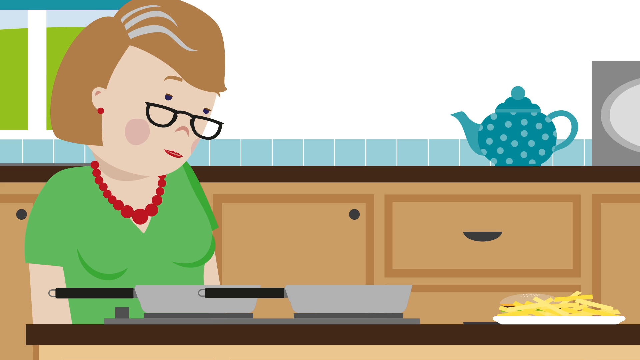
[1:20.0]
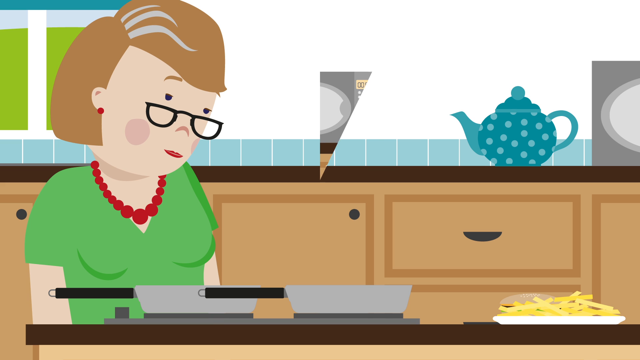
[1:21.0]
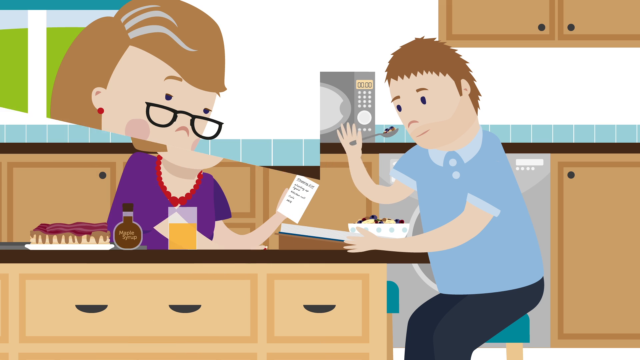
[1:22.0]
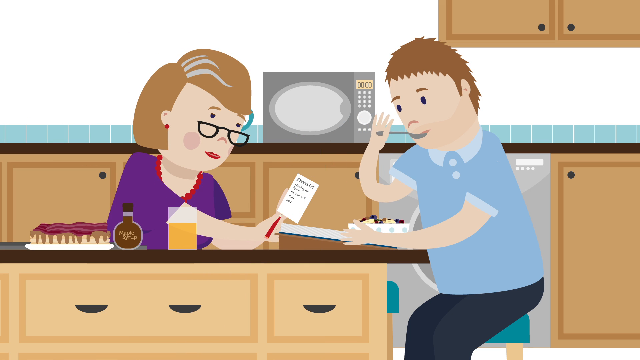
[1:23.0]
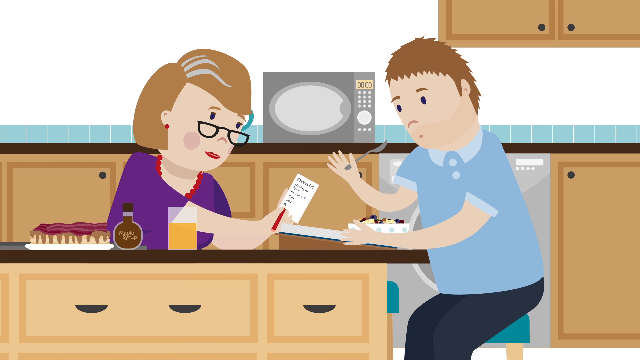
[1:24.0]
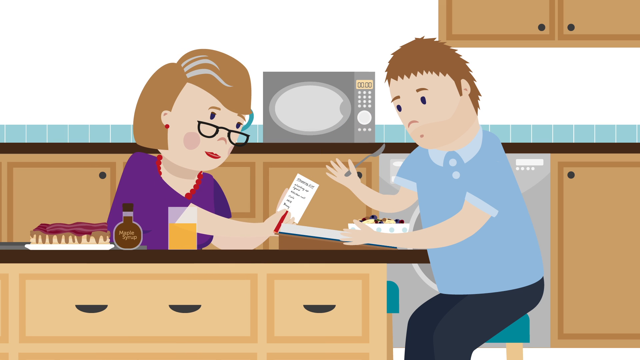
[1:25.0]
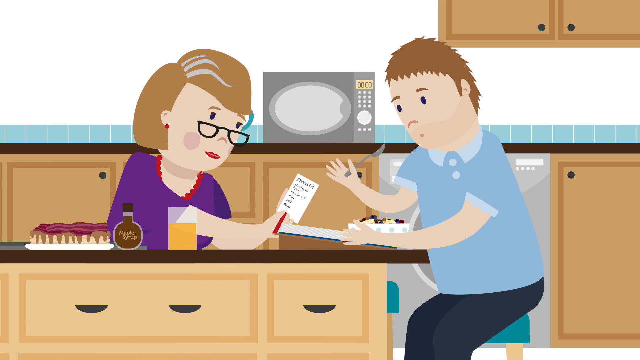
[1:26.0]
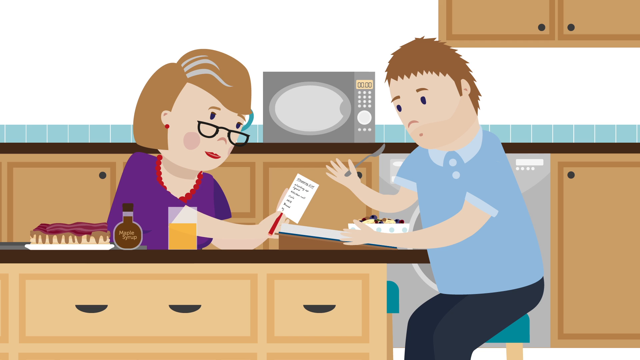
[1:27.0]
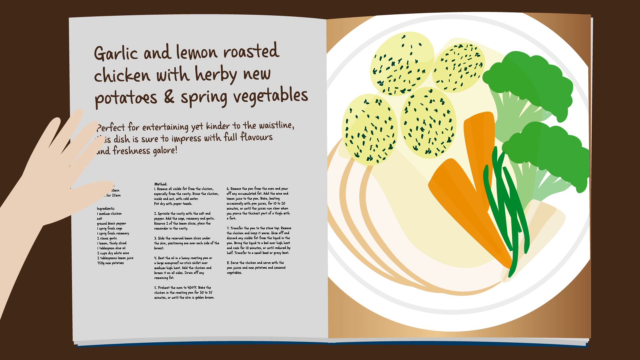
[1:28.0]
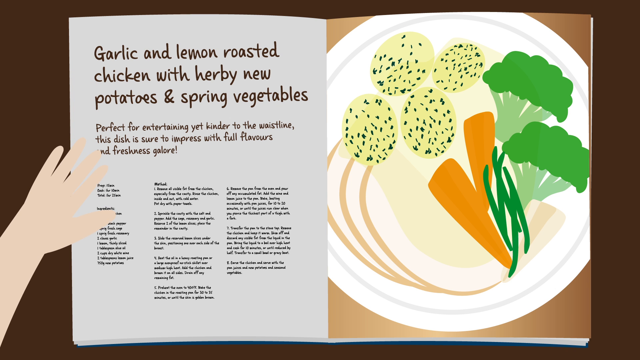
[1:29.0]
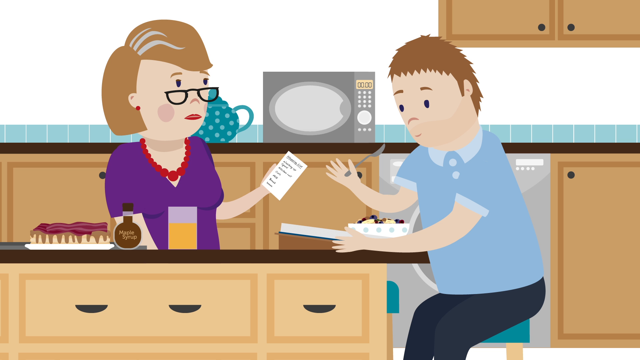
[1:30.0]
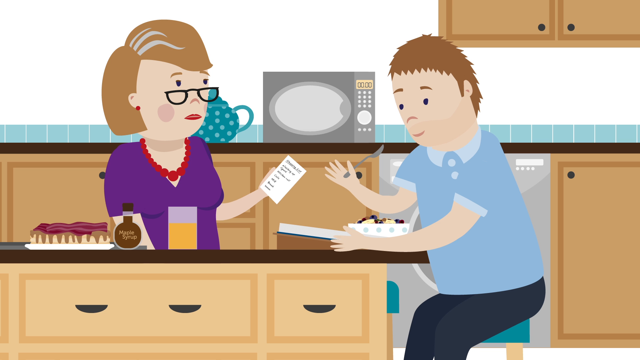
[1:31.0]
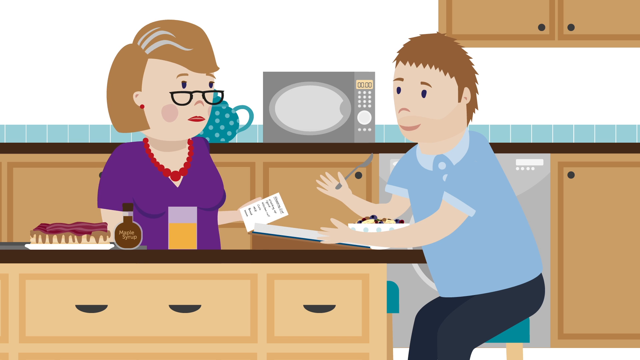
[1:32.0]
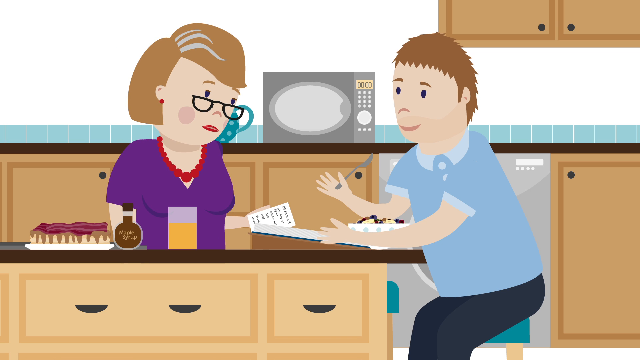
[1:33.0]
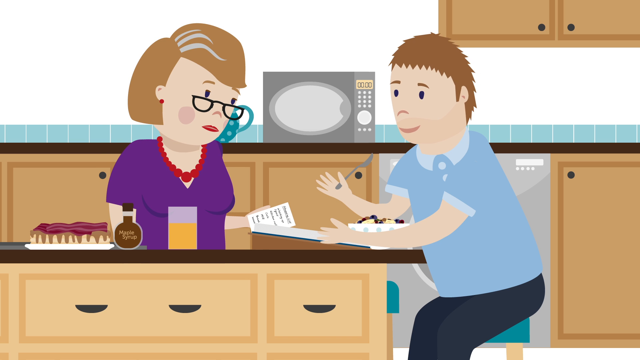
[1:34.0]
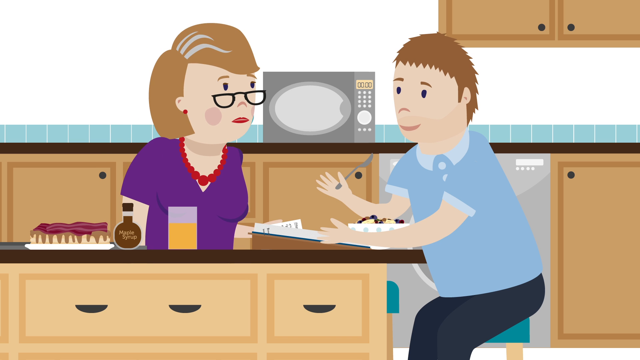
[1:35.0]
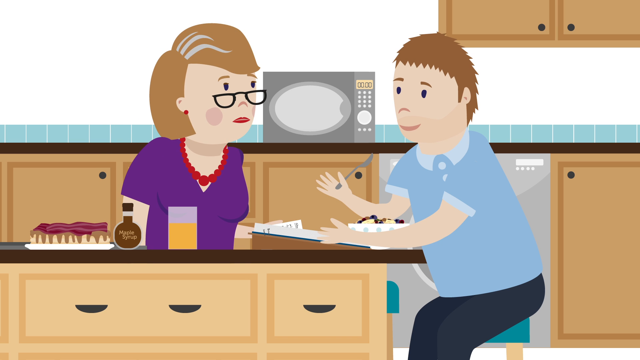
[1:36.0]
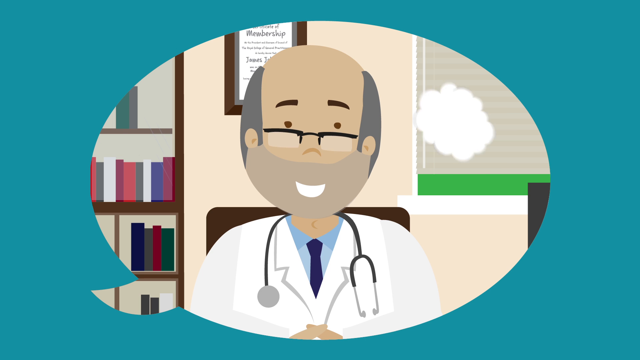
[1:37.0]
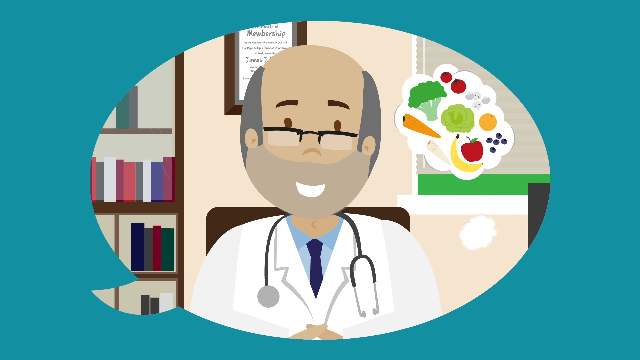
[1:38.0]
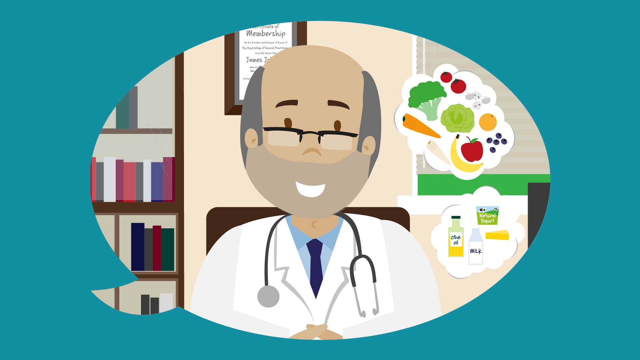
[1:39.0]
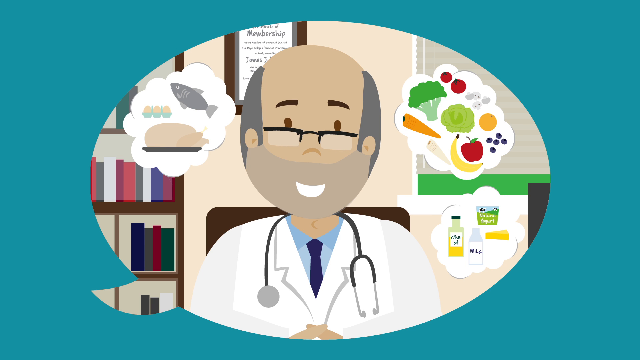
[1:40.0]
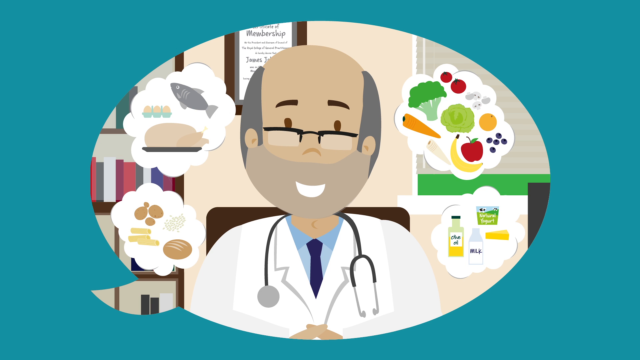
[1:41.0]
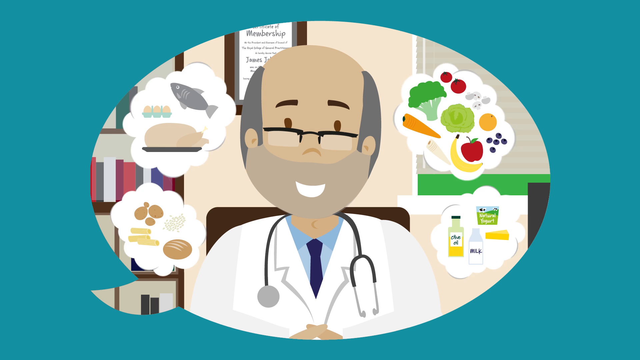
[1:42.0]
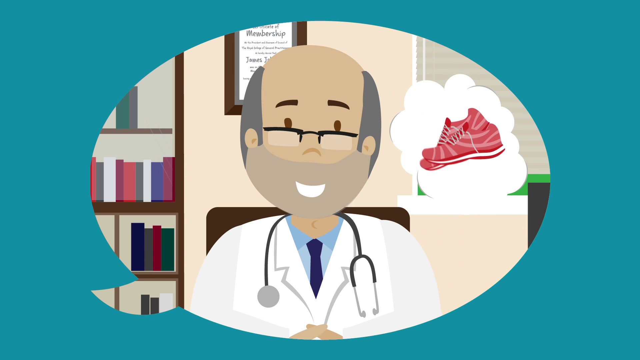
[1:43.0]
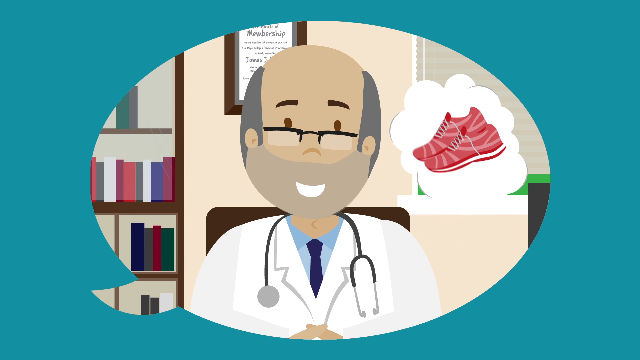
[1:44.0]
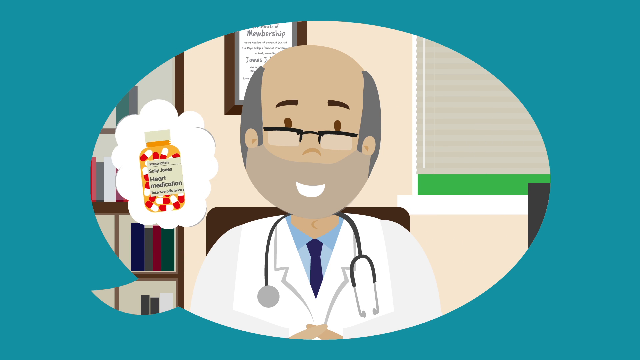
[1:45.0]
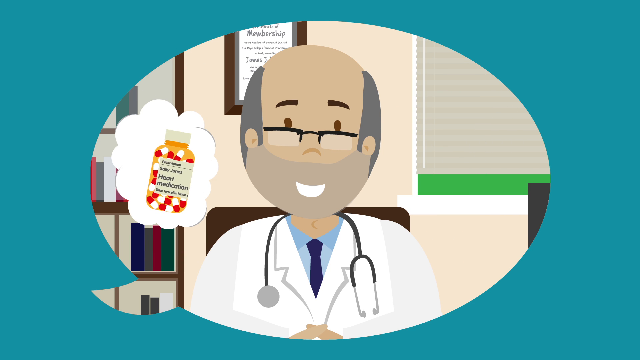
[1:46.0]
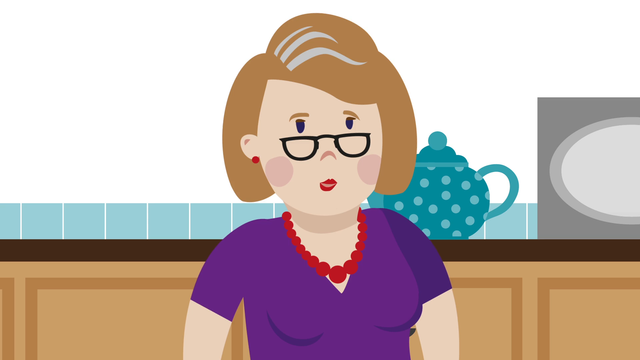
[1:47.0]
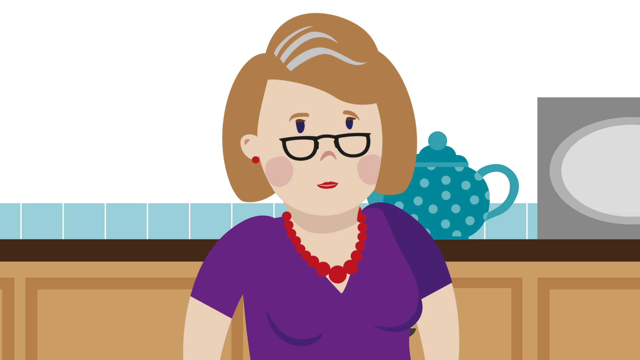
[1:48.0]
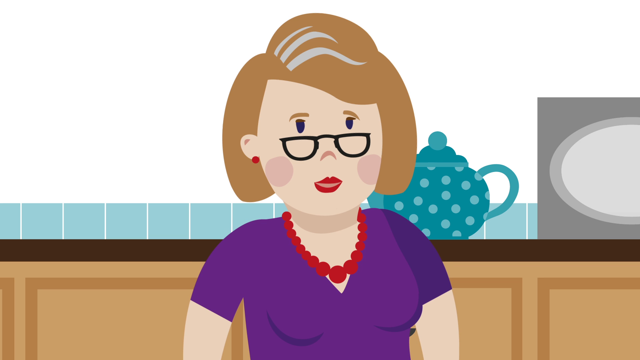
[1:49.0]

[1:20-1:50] The lady, who may be a cook, teacher or mom, has black-rimmed sunglasses, brown hair, a green sleeveless dress and a red necklace. In the background are the blue teapot with light blue dots, a little blue tile above the cabinet or counter, white walls and a small gray part of the microwave. On the right side of the screen is a plate with possibly french fries and a hamburger or sausage, two gray pans are on the stove part of the island, and there is a little green on the left side of the screen. Not much is happening. The cabinets are brown, with light tan cabinet doors with a lighter border. The lady writes something down, and a boy in blue, maybe another son, is reading something and eating. The lady, in her purple dress, holds out a paper with possibly ingredients or requirements toward the boy in the blue shirt, light blue pants and brown hair; she is not handing it to him, but he has his hands out. A bald doctor with glasses and a stethoscope appears, with various foods in little bubbles. The video then shows a close-up of the teacher in the purple dress.